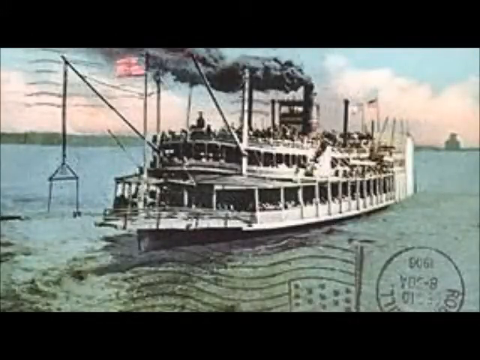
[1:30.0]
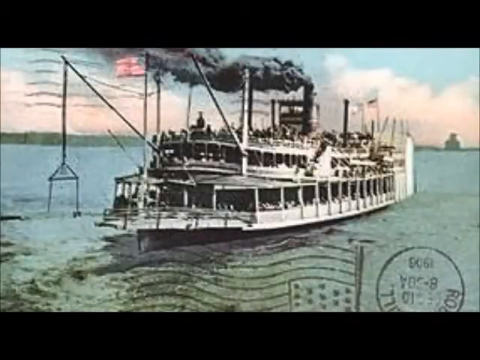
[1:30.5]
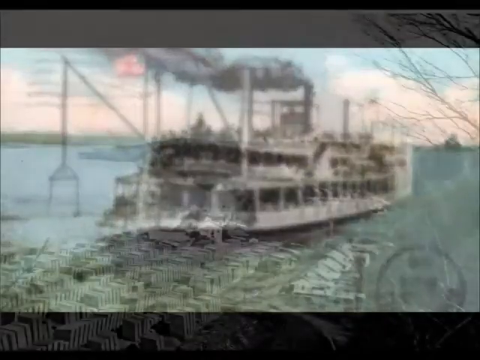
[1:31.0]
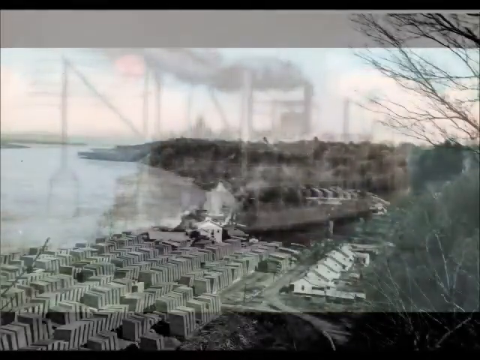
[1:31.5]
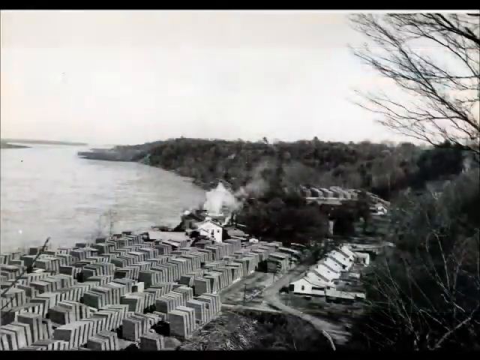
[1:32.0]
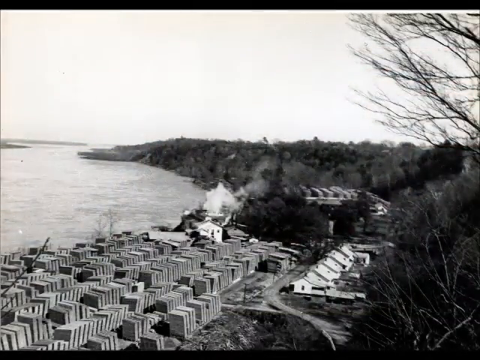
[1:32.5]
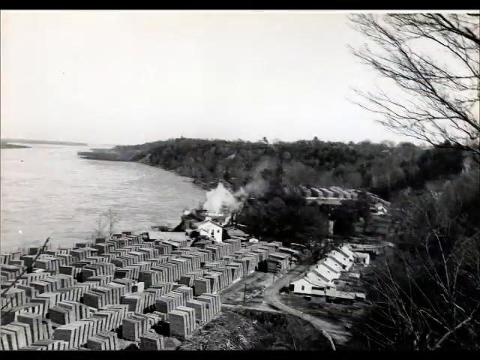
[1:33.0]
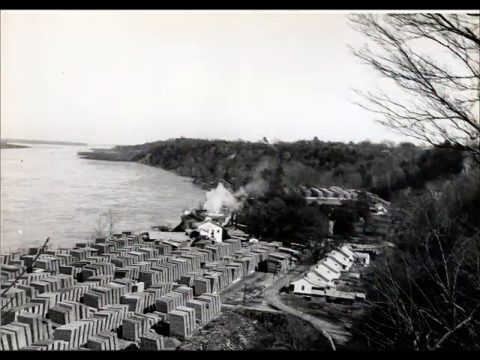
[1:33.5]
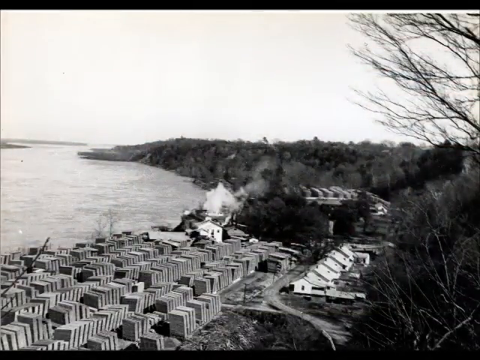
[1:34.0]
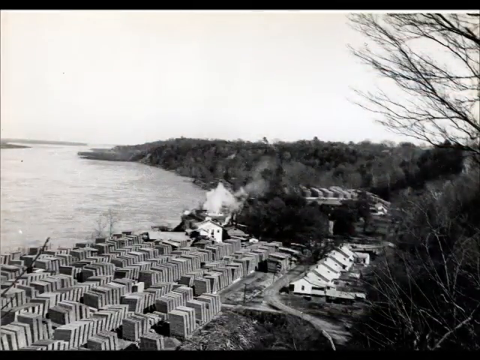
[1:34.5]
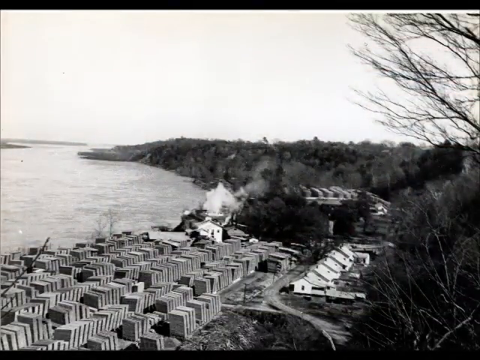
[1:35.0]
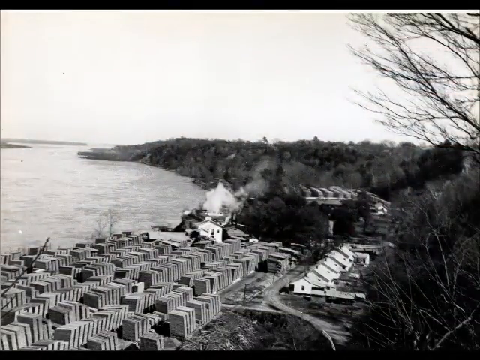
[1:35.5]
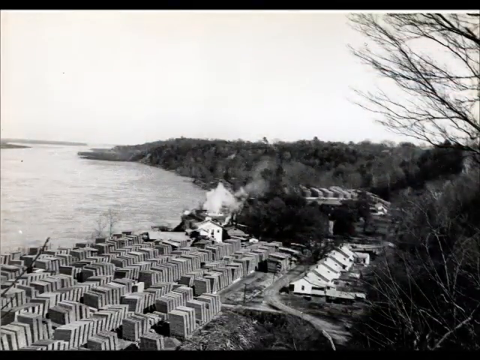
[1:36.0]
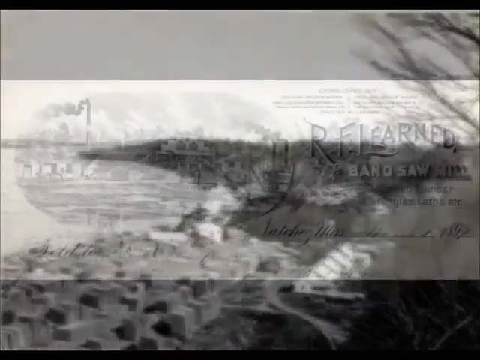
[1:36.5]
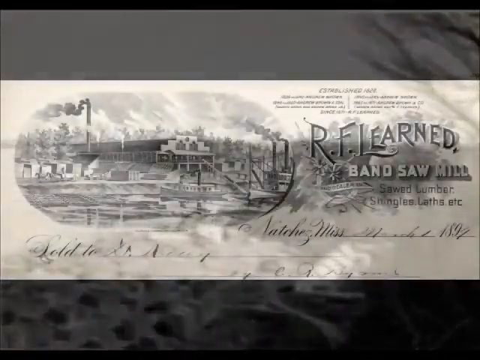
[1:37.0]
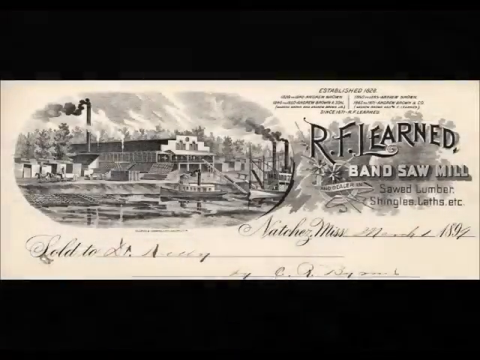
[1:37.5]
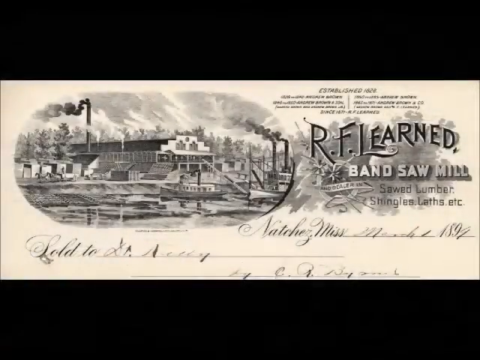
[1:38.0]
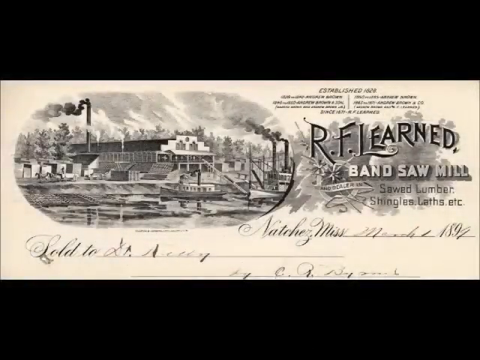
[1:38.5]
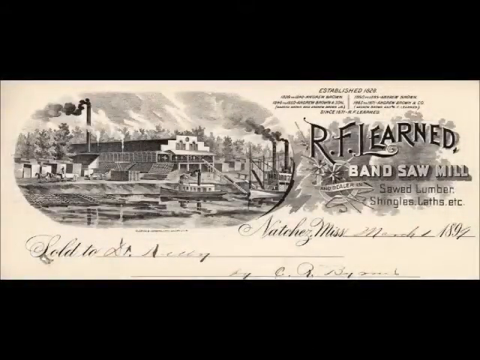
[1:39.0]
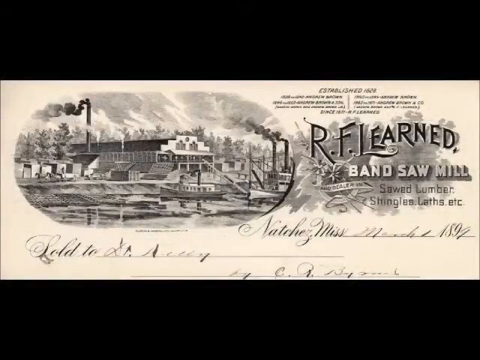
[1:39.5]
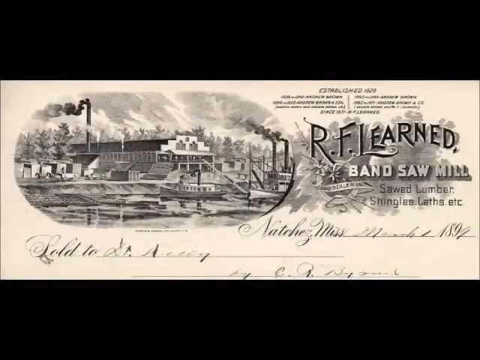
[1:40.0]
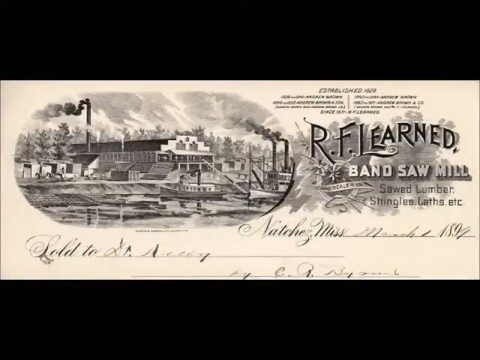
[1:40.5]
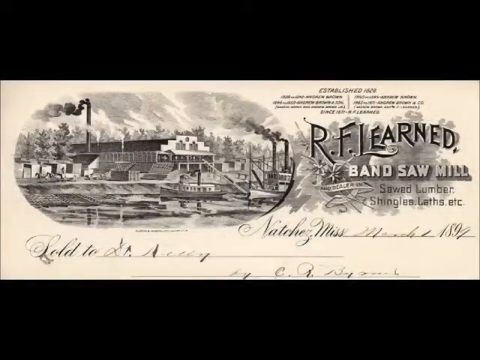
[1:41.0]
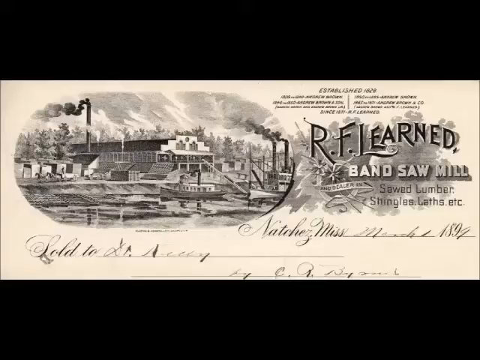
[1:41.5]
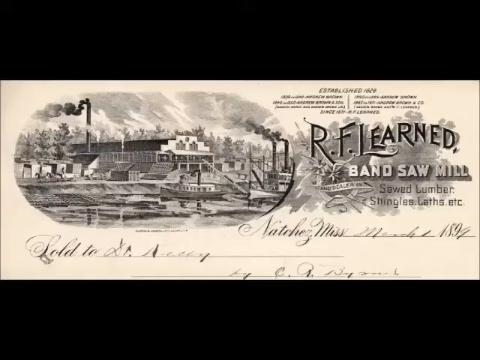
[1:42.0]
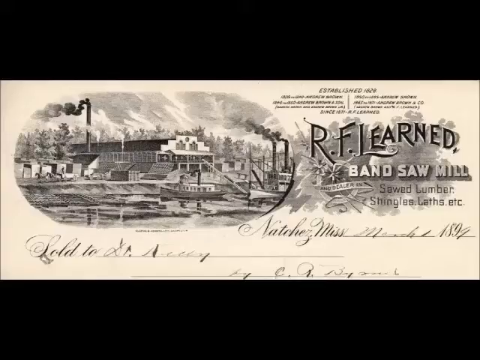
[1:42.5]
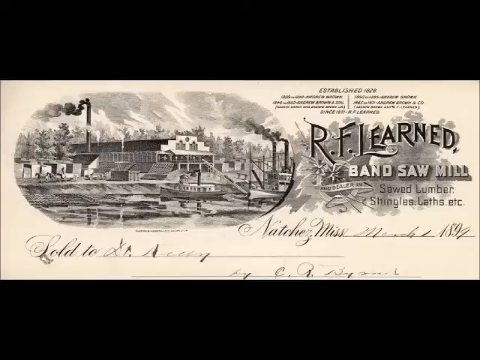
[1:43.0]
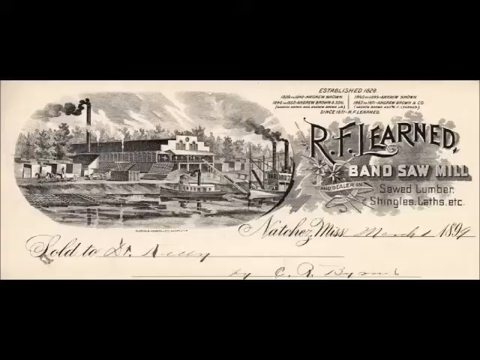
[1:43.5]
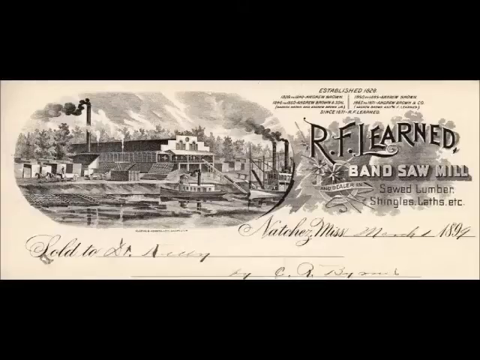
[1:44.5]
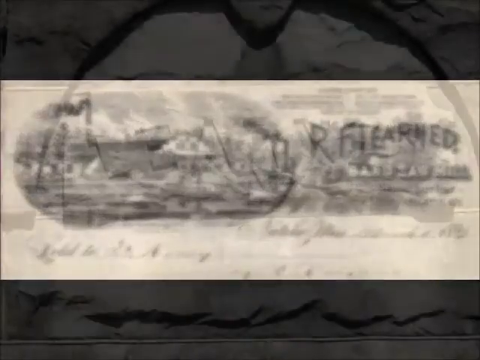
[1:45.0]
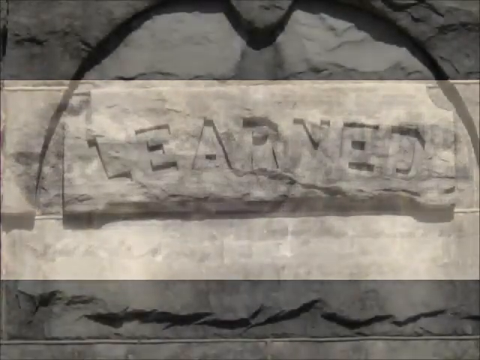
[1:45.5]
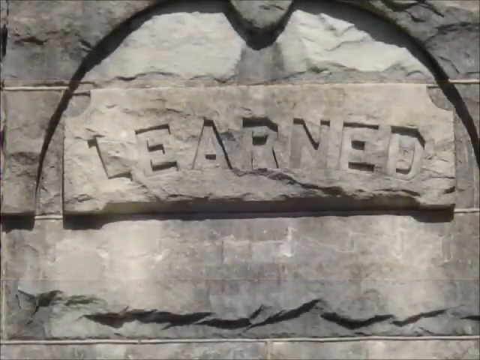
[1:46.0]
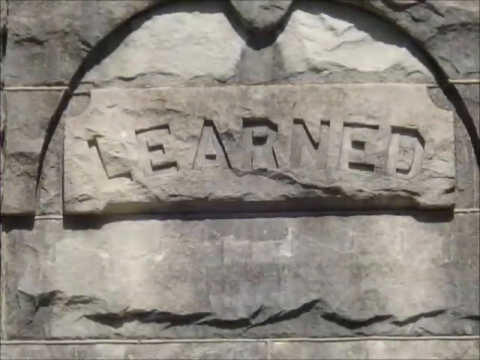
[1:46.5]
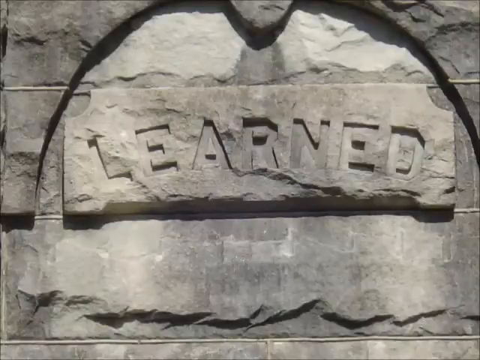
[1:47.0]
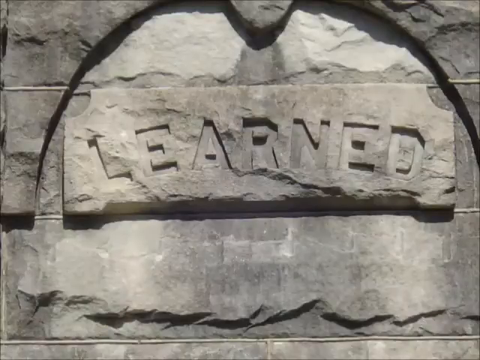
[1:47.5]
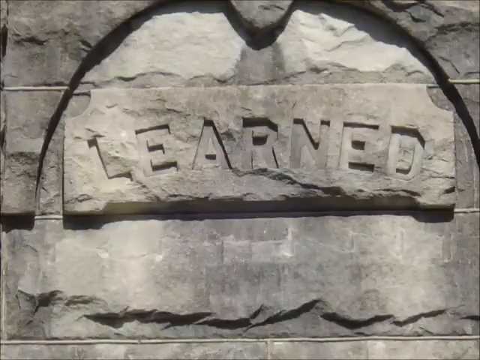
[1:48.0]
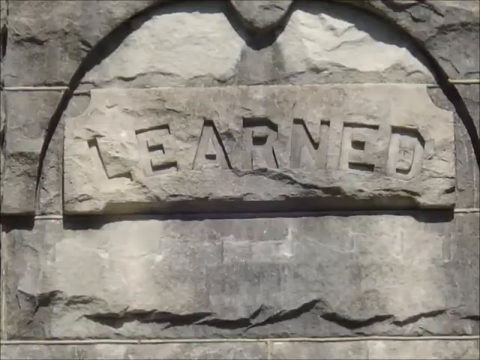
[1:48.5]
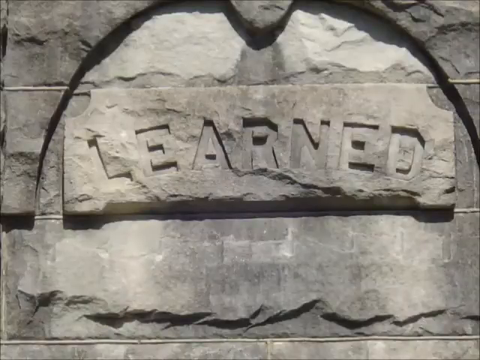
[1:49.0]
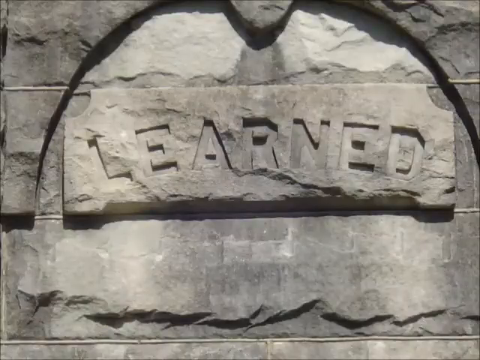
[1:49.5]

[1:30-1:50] A very large amount of lumber appears to have been collected in a lumber yard. There is one house, a river, possibly the Mississippi, and a number of trees. Next is a rather cartoonish picture of a sawmill showing a boat, another steamboat with two smokestacks, and a building in the background with a smokestack; it seems to be a flyer for the R. F. Learnage sawmill. Then the name Learnage appears carved into a thick slab of rock, apparently as a memorial to Learnage, possibly on the side of a building.